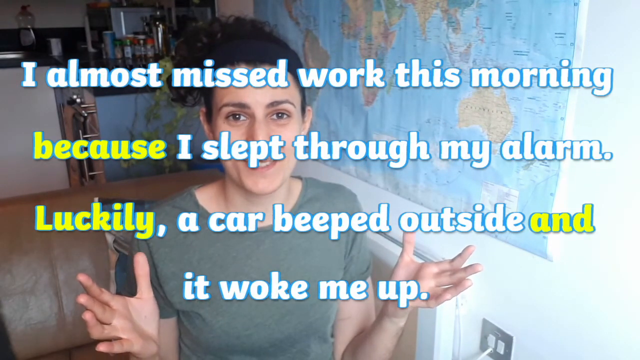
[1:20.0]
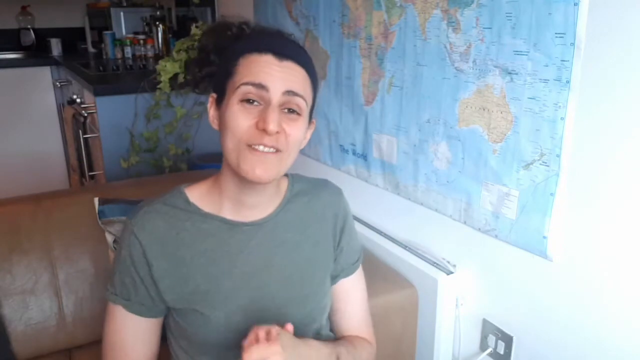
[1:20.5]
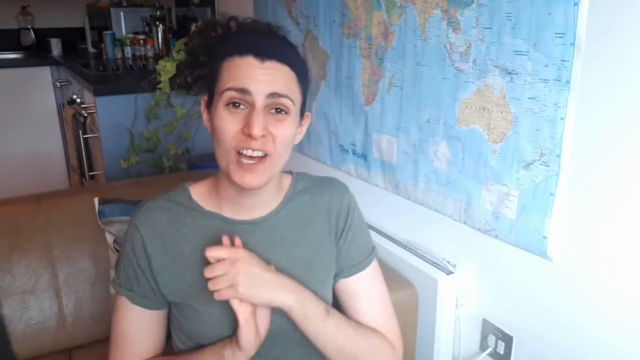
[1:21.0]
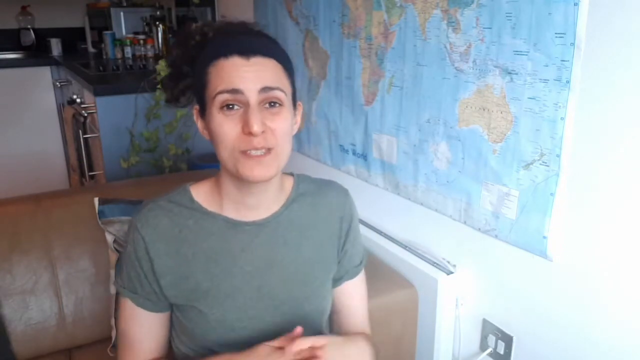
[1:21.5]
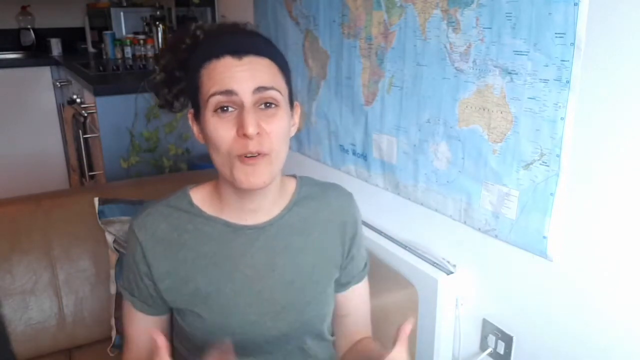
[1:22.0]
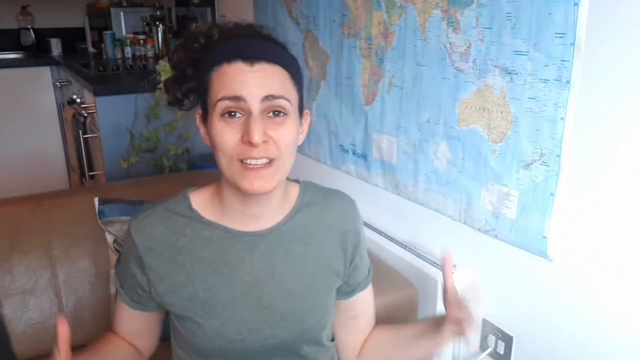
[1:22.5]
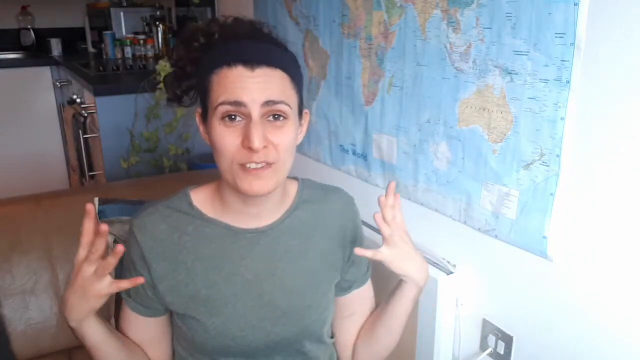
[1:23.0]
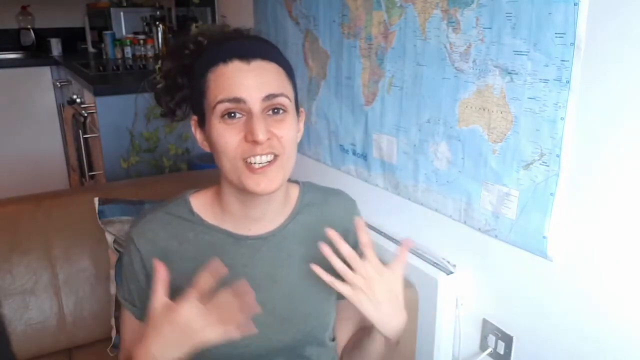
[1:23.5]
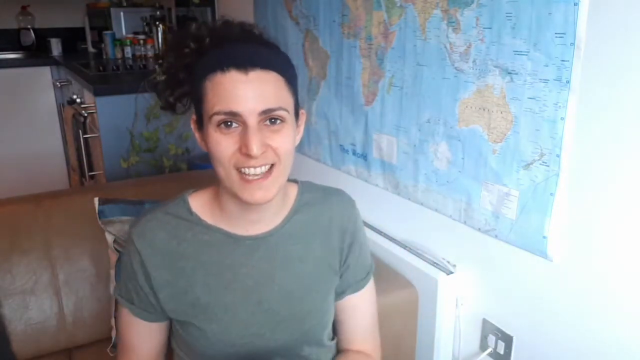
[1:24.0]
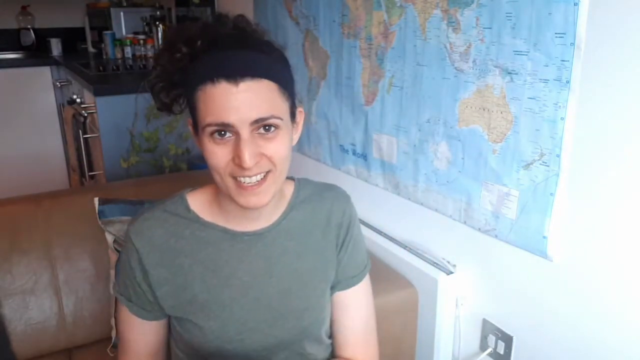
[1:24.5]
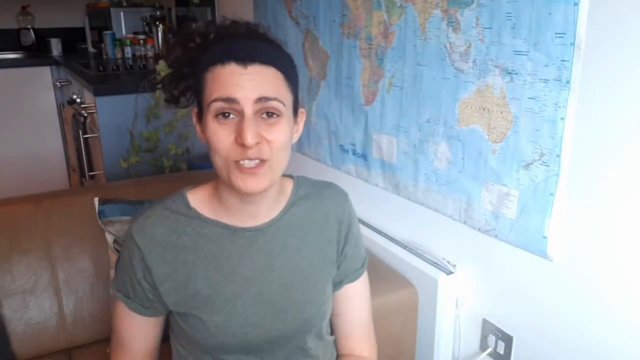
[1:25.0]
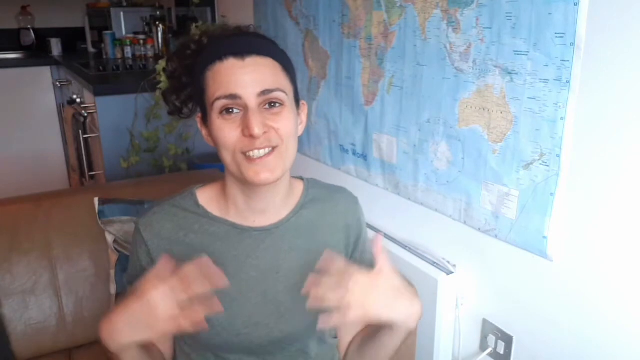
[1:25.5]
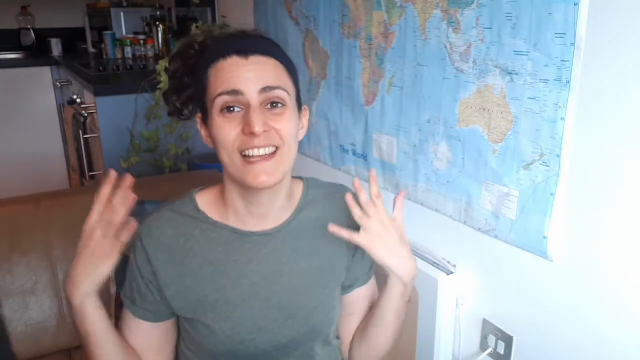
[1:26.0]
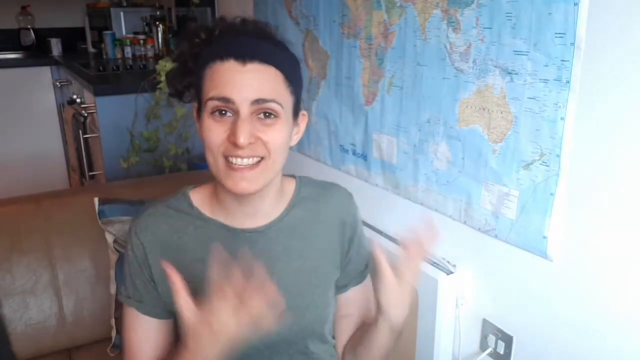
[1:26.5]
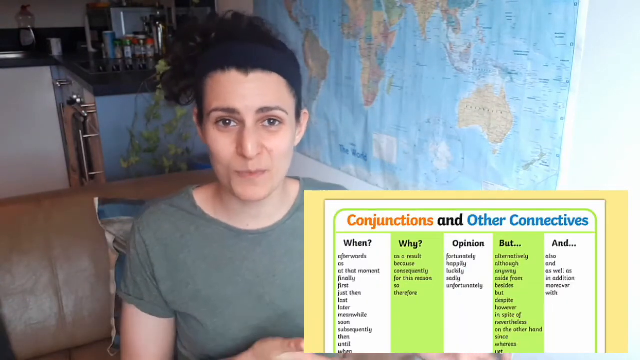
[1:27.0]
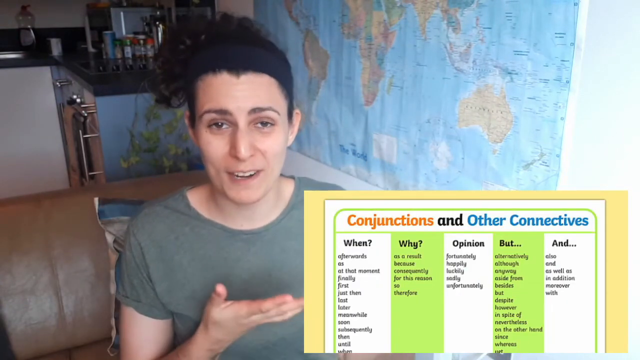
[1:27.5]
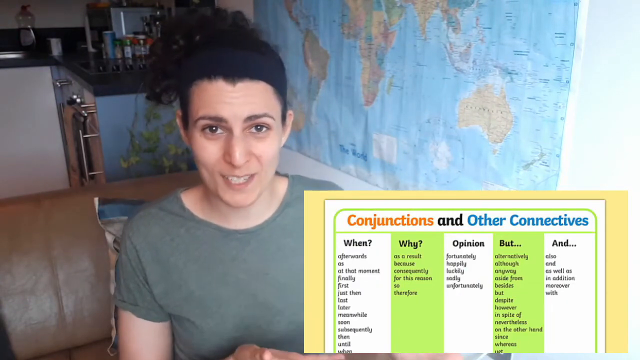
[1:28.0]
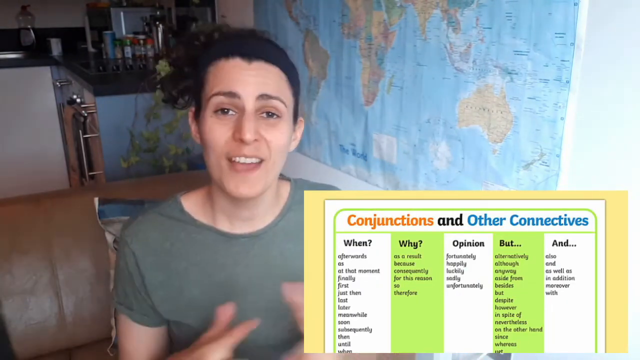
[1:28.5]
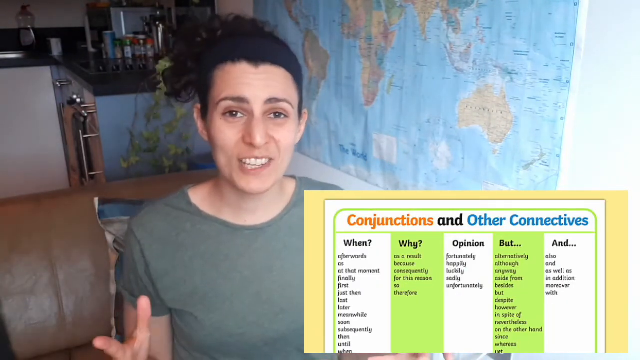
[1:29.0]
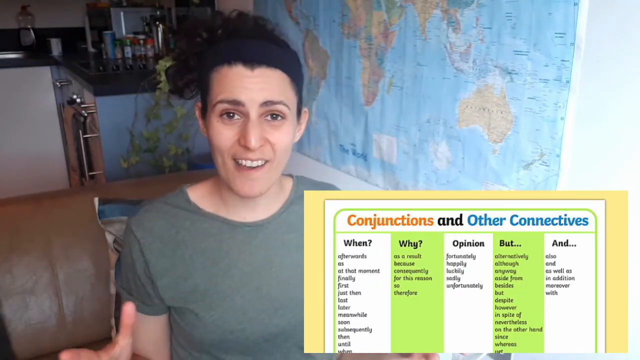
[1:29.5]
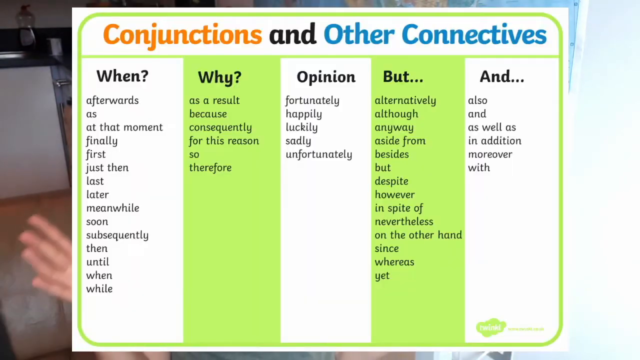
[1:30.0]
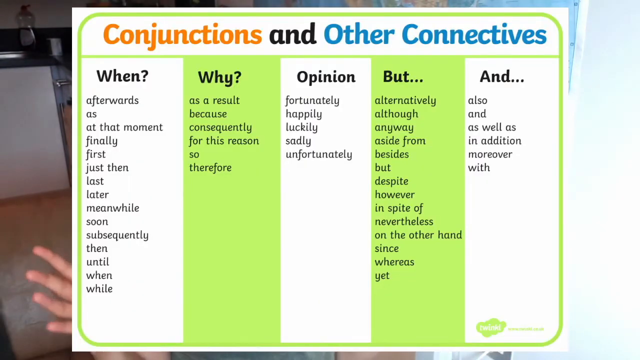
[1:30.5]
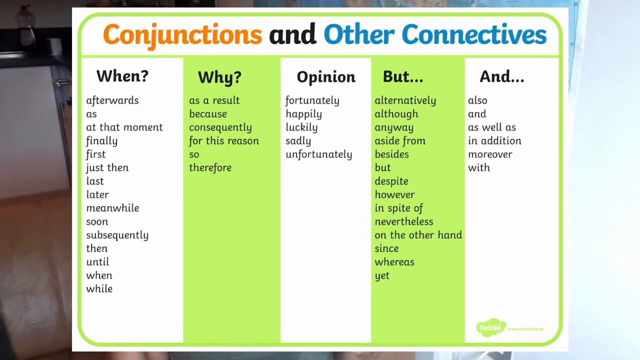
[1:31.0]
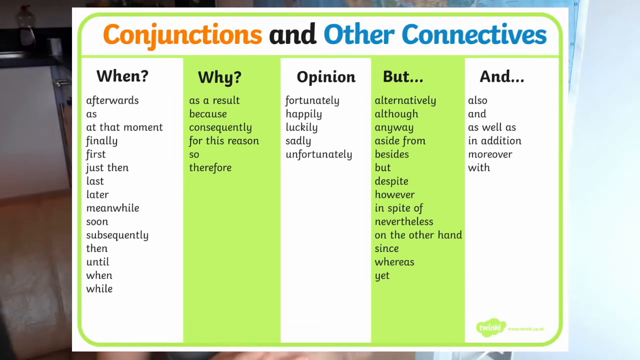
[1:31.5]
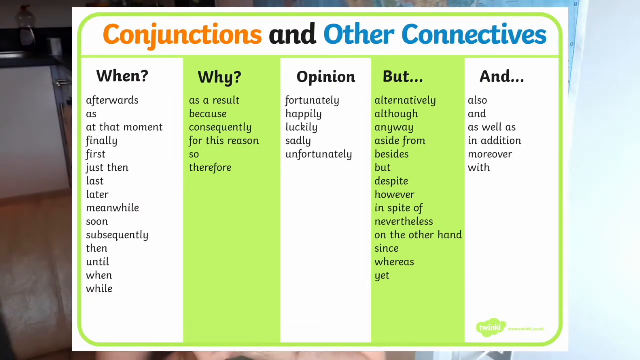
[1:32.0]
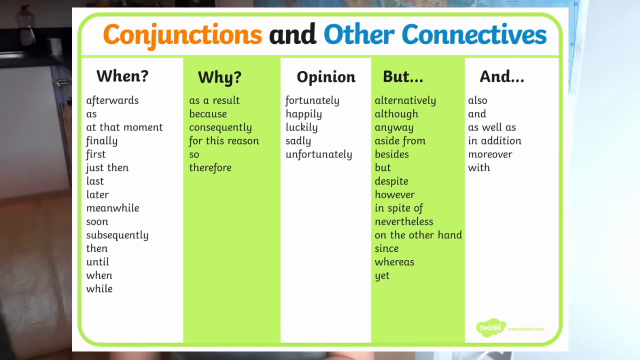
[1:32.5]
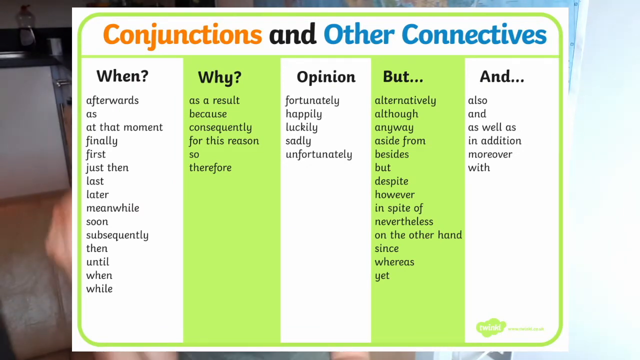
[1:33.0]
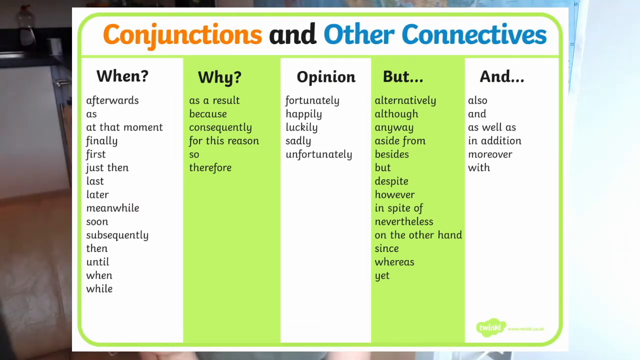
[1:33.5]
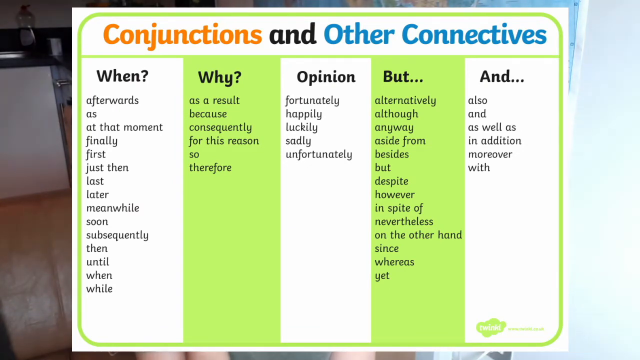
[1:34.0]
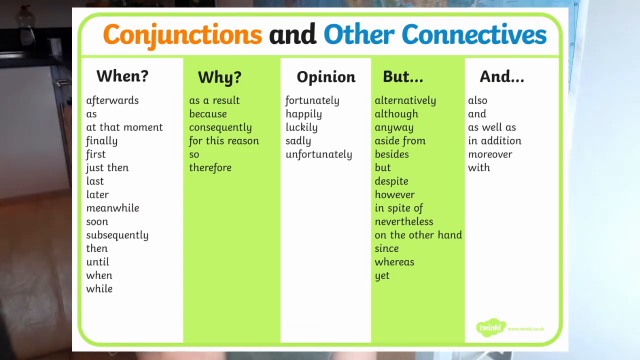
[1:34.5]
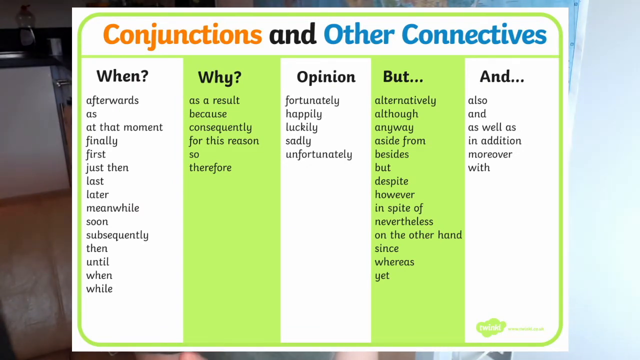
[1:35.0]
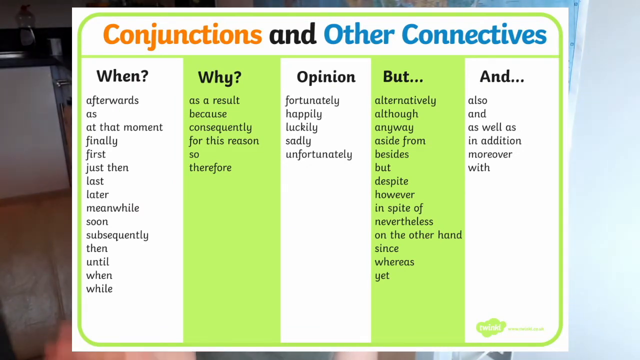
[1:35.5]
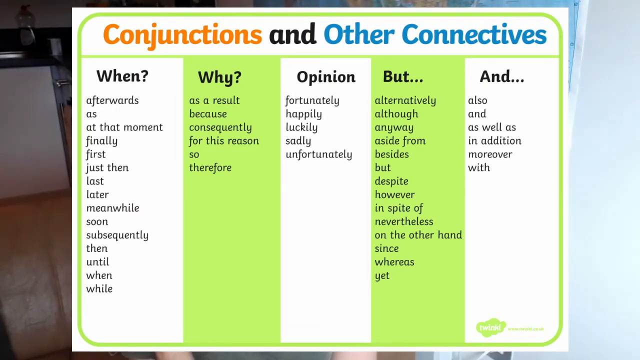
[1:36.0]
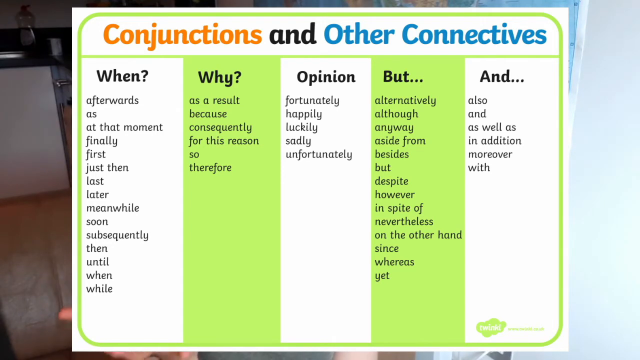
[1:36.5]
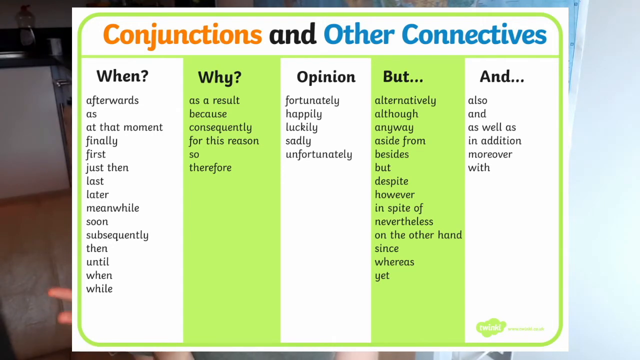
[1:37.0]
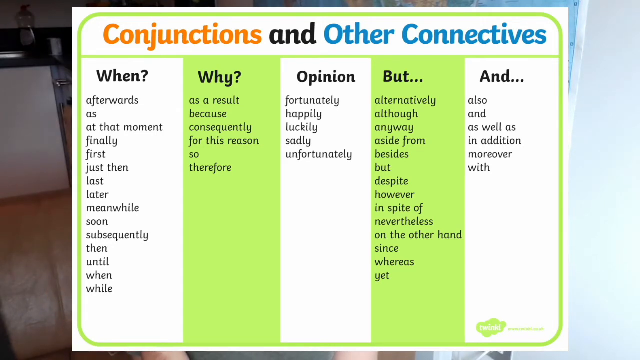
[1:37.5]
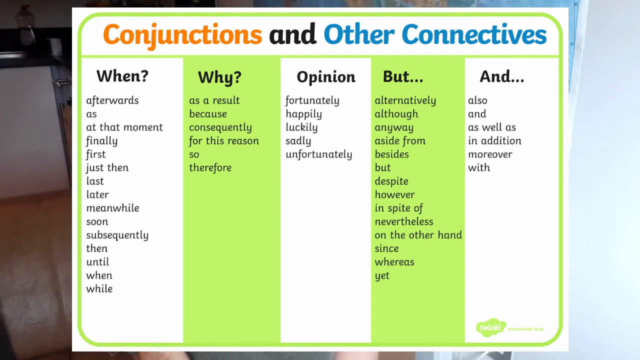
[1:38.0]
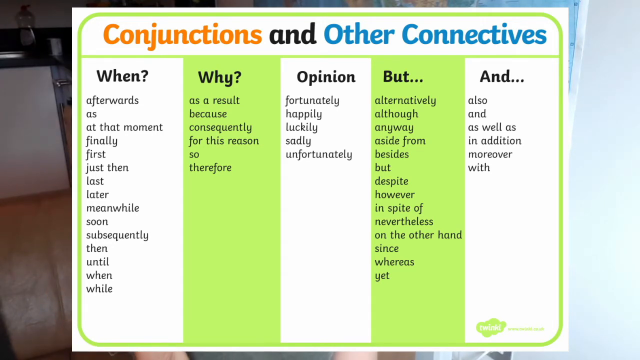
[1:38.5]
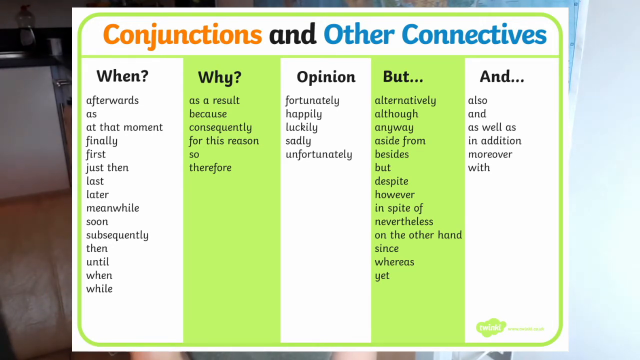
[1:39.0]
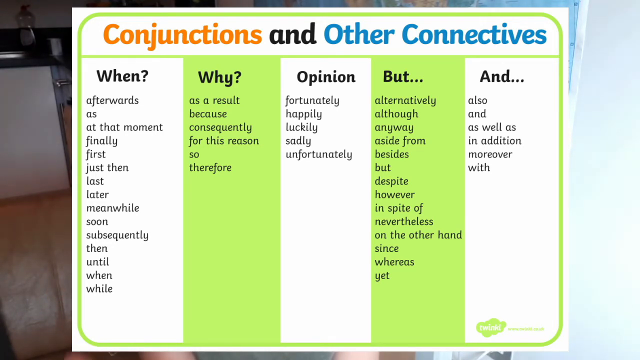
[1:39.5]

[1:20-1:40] The sentence "I almost missed work this morning because I slept through my alarm. Luckily, a car beeped outside and it woke me up" is shown, with "because," "luckily," and "and" in a different color. The woman is still talking at the camera. A chart about conjunctions and other connectives appears, with lists of words under the headings "when," "why," "opinion," "but," and "and." The "when" column is white, "but" is in green, and "and" is in white. The chart is behind her as she talks about it.